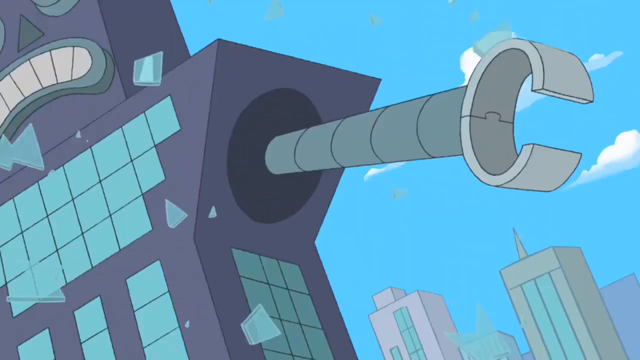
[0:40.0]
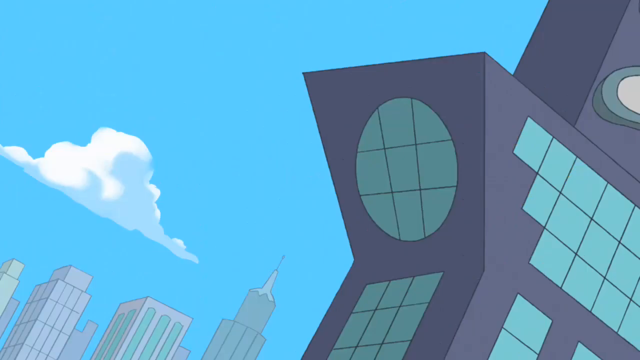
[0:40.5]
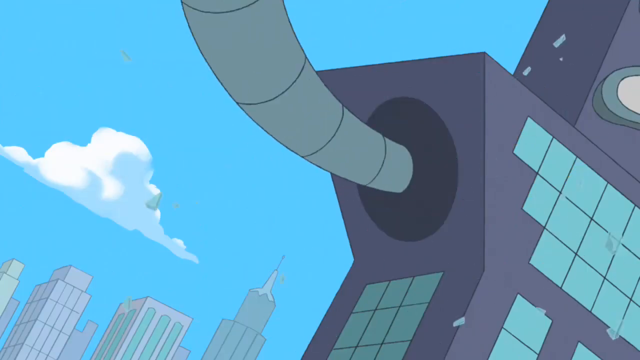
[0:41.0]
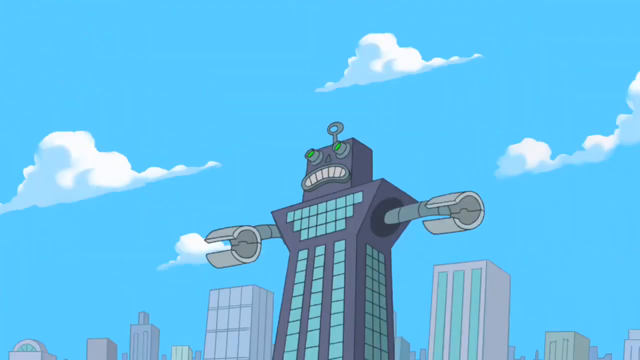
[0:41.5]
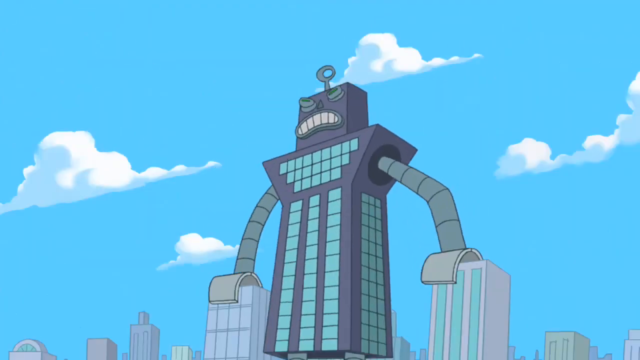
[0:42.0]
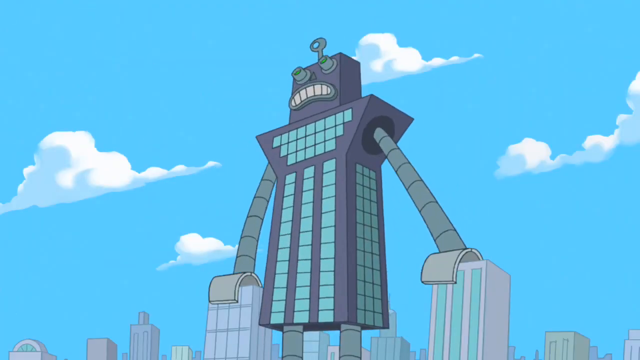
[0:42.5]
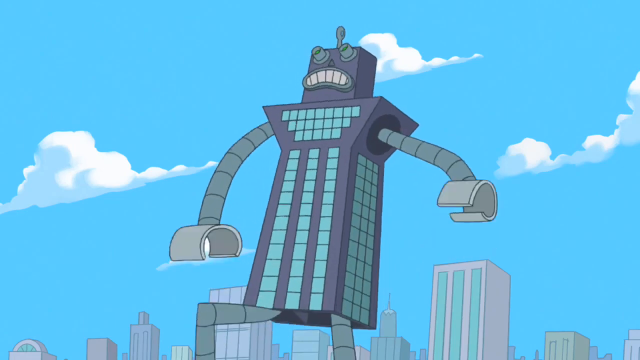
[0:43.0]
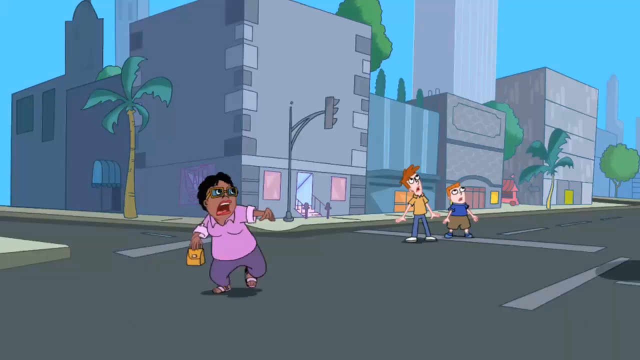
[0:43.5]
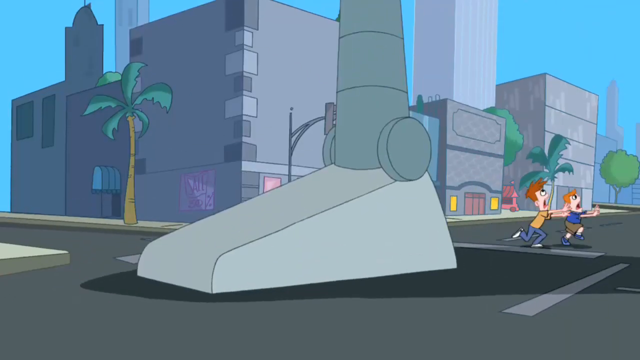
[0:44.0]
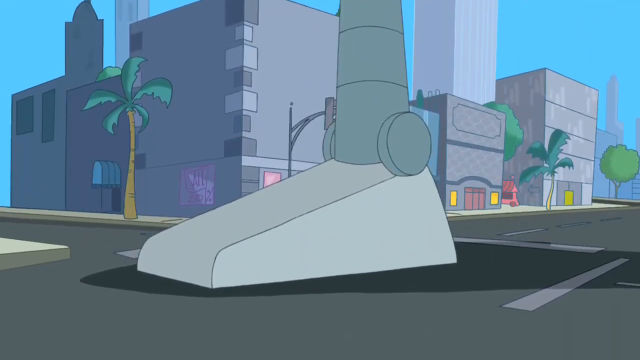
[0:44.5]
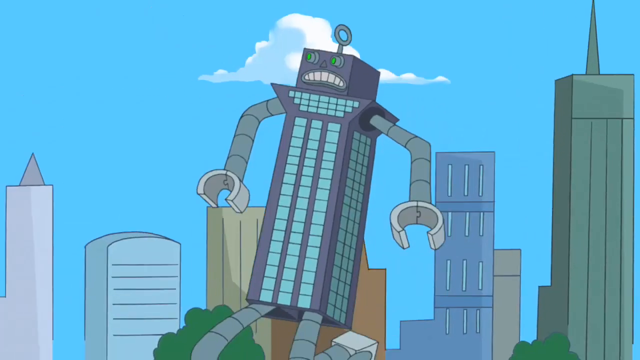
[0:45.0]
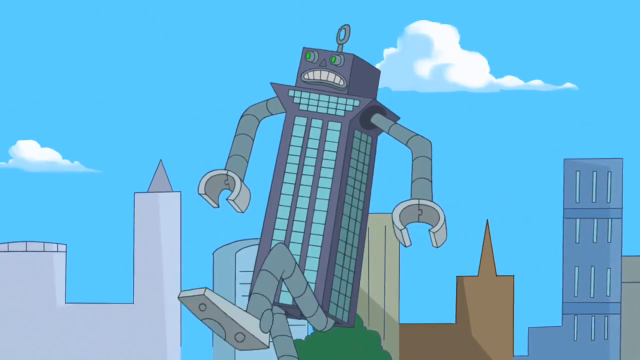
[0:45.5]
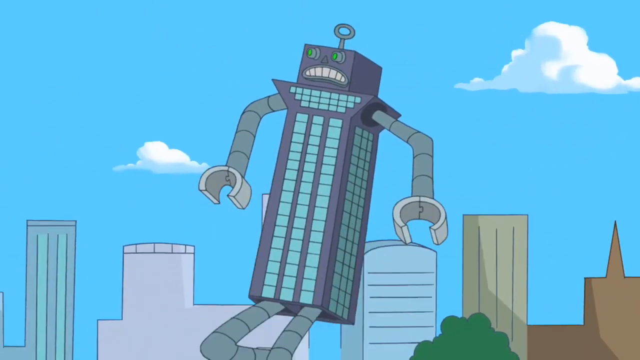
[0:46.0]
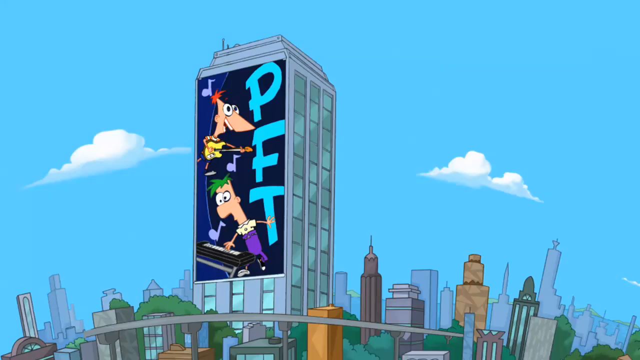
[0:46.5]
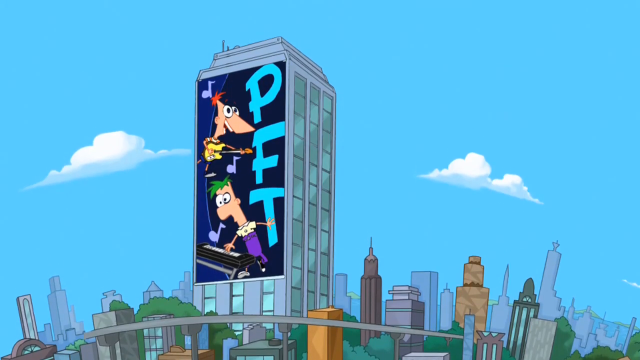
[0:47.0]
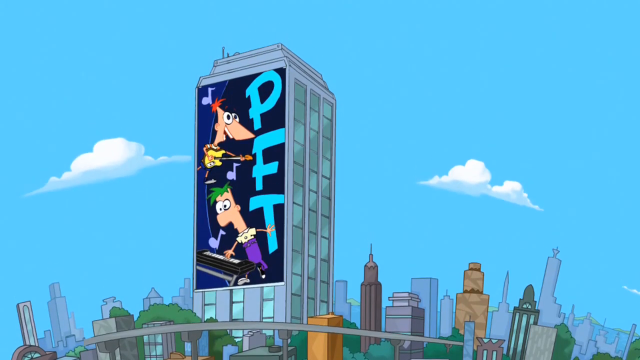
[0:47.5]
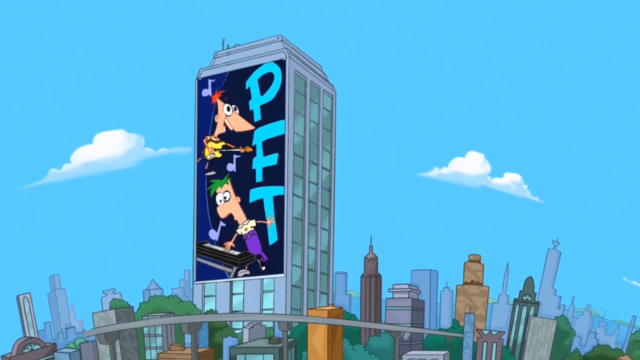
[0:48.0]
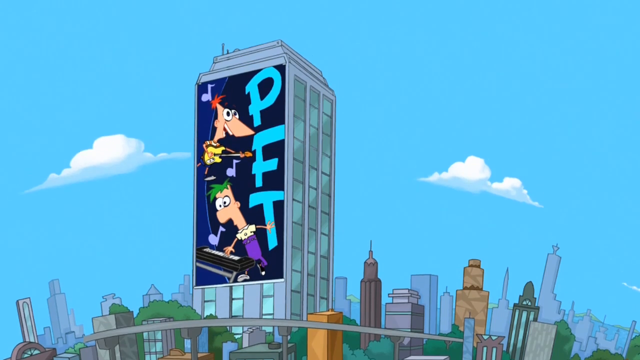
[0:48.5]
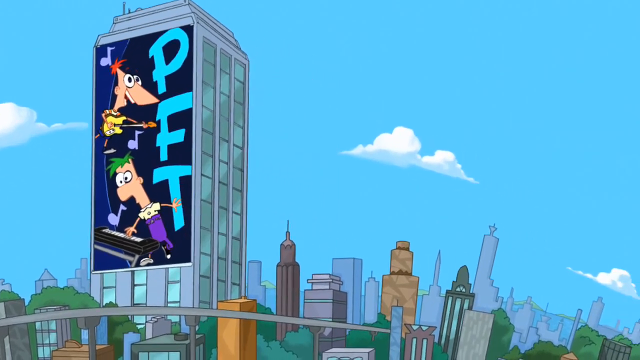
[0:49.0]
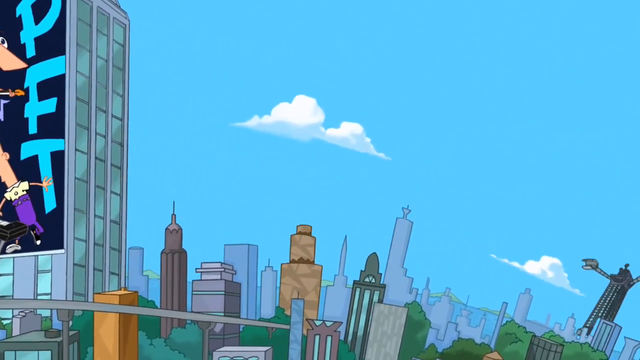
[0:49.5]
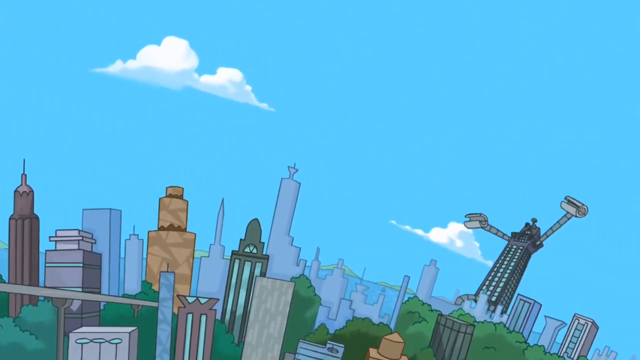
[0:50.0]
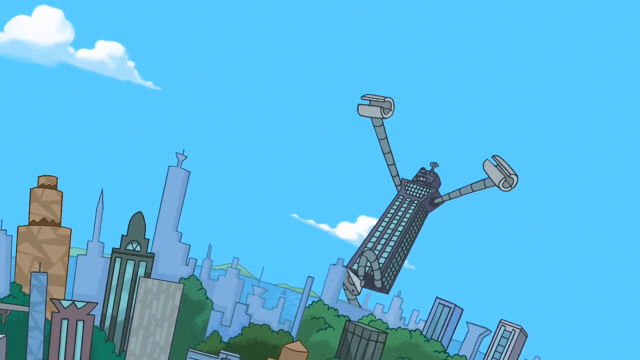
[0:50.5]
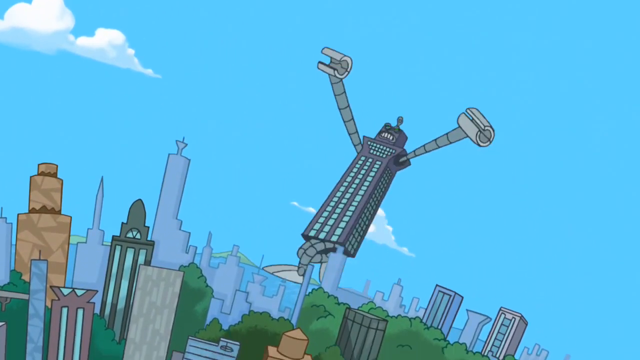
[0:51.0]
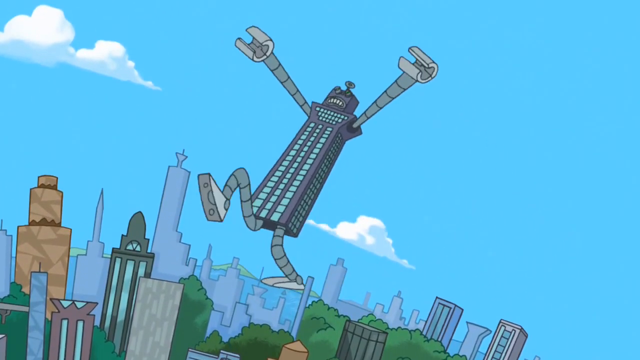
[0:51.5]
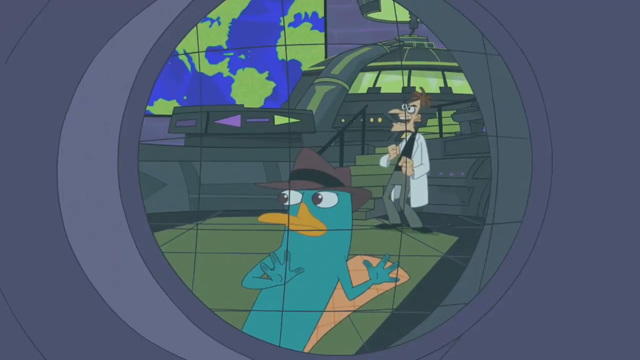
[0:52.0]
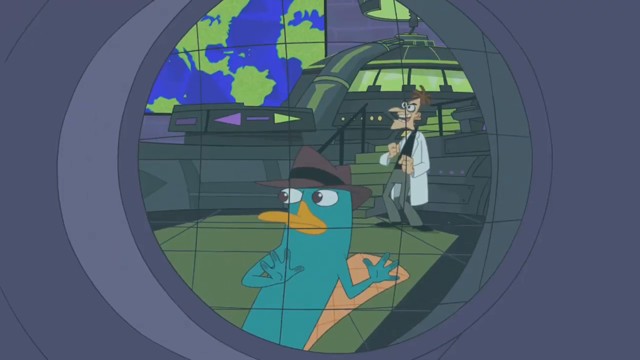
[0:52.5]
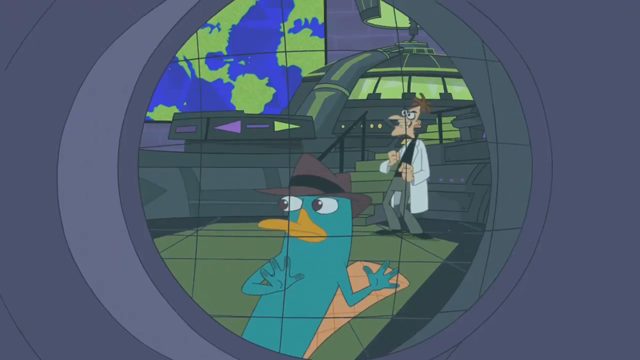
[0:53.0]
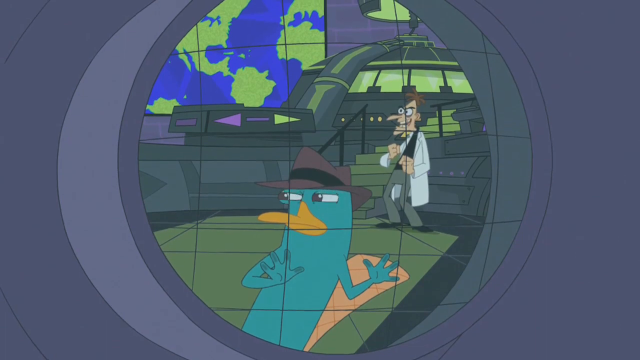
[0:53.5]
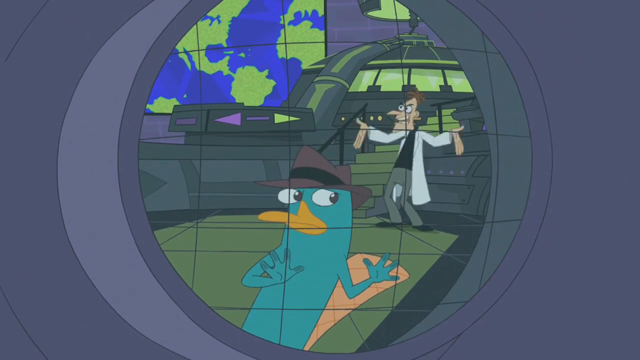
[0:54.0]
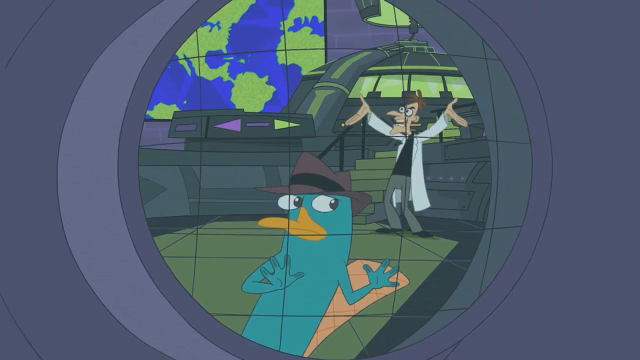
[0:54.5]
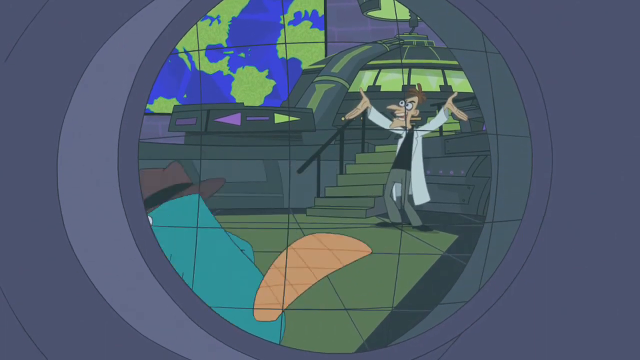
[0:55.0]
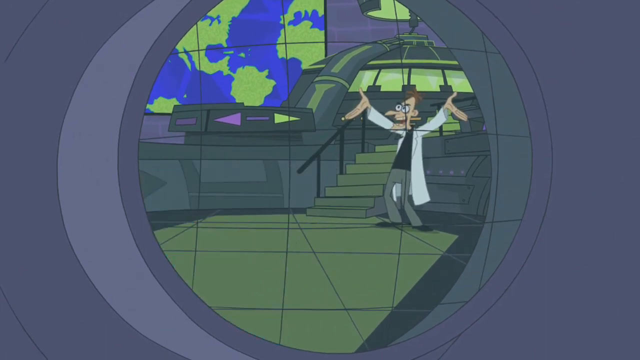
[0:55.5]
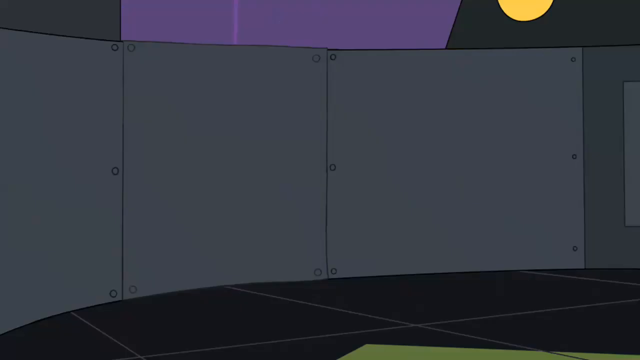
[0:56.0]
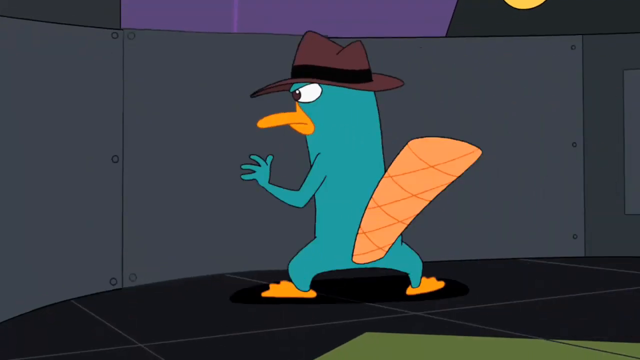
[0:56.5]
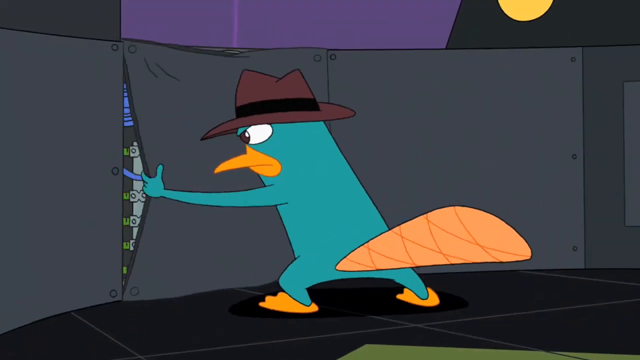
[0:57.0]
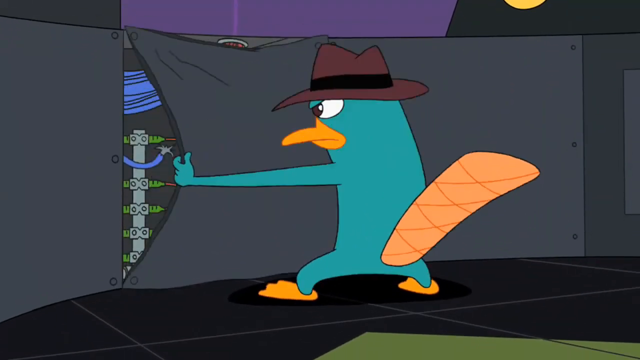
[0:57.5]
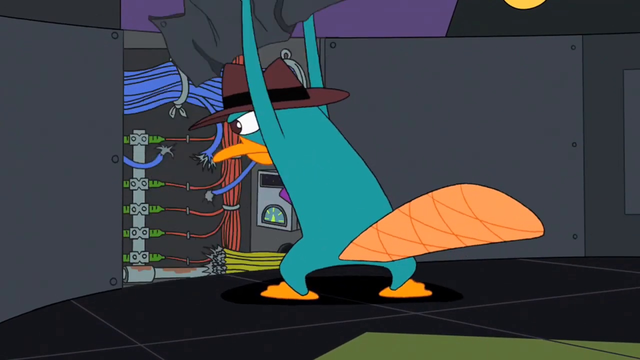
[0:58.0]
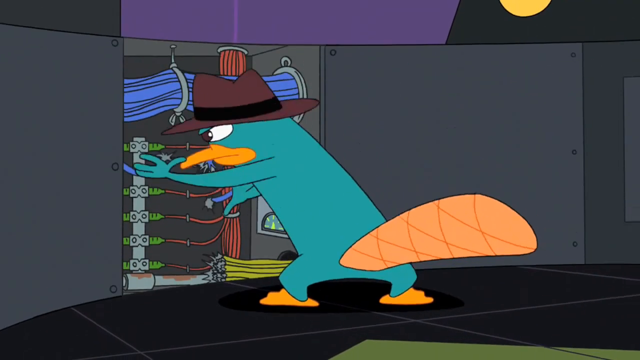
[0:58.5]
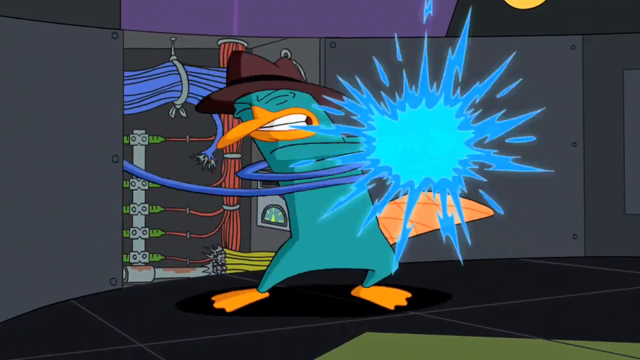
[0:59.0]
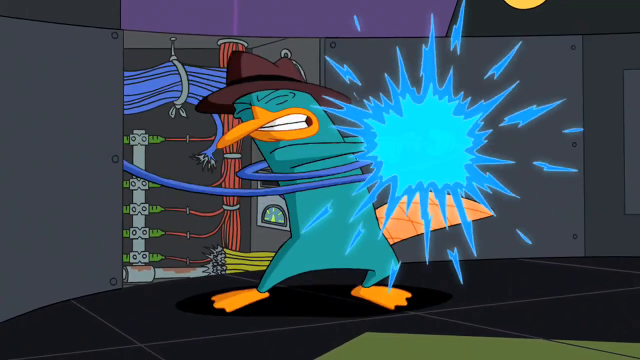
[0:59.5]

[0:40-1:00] The building turns out to be a huge robot, activated by the lever the mad scientist pulled. The scientist and the animal, which looks like it might be a platypus, are inside the high-rise headquarters and laboratory, which has taken off. The building, now a robot, marches around the city, stomping toward the terrified citizens and causing destruction in its path, though it doesn't look like anyone has been killed. The platypus character seems to be trying to pull the lever, perhaps to shut down the giant robot.